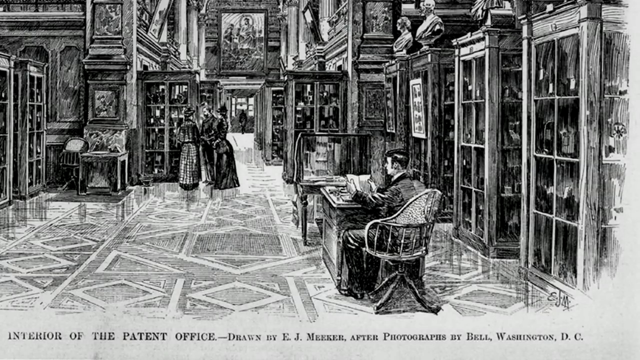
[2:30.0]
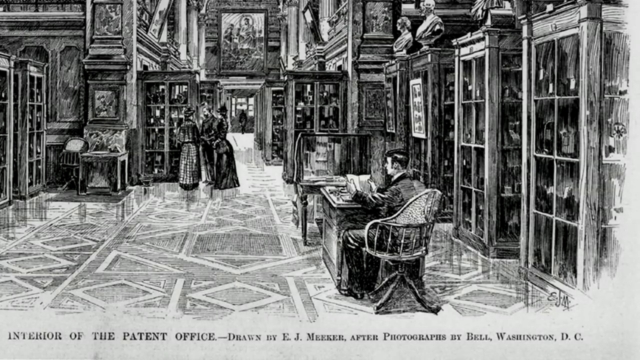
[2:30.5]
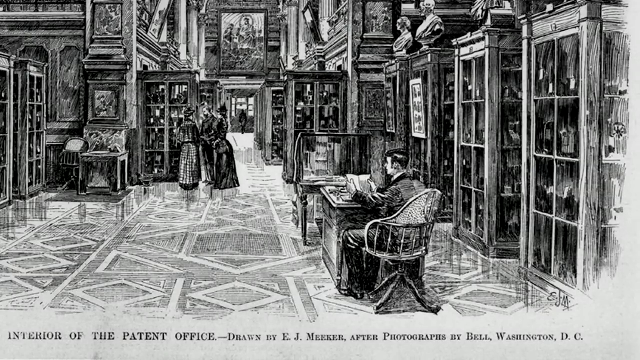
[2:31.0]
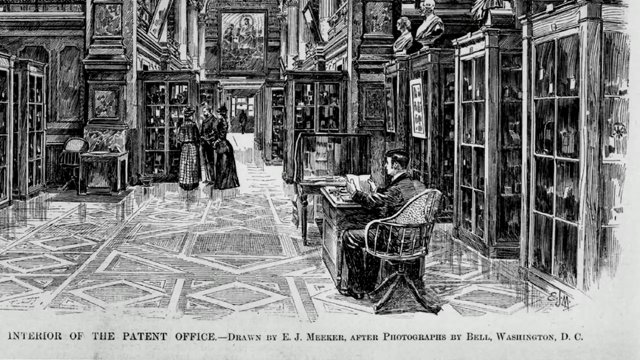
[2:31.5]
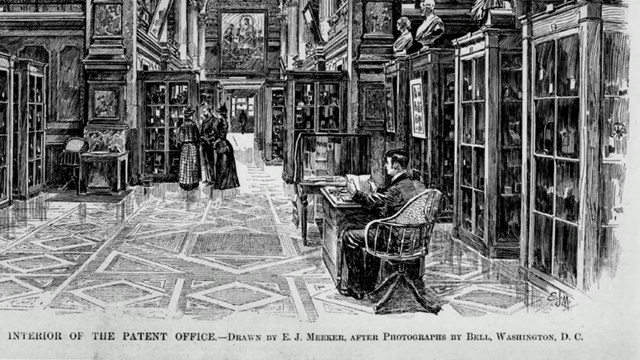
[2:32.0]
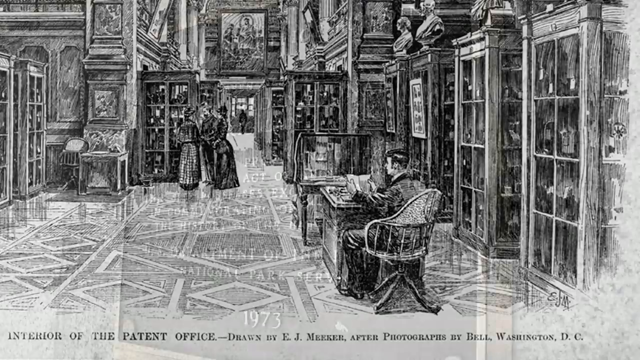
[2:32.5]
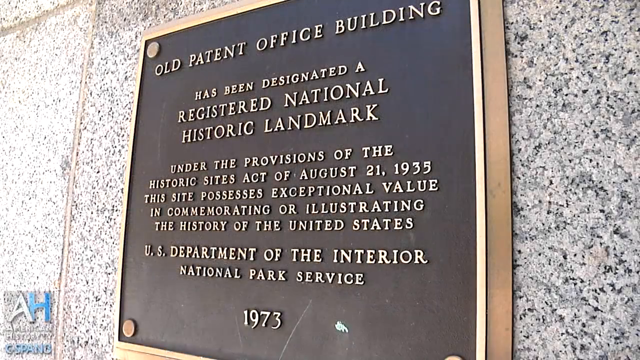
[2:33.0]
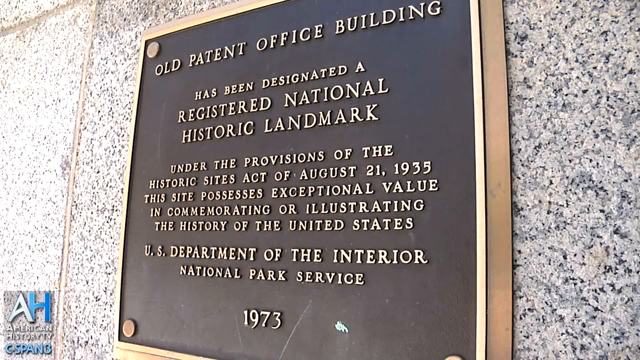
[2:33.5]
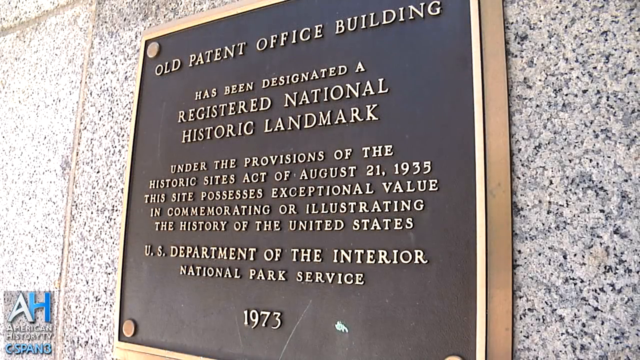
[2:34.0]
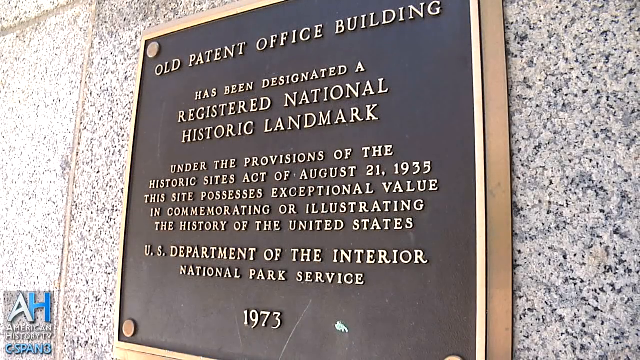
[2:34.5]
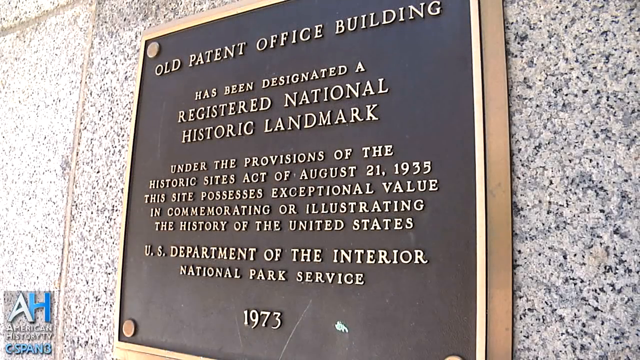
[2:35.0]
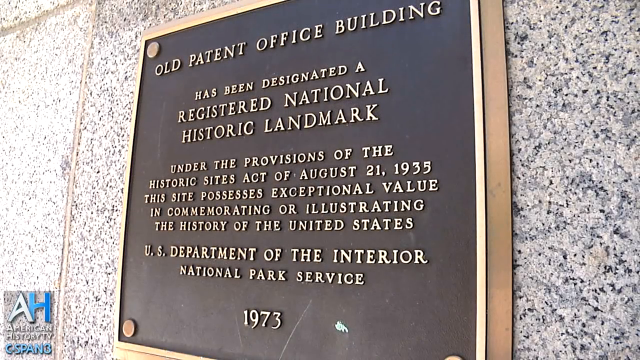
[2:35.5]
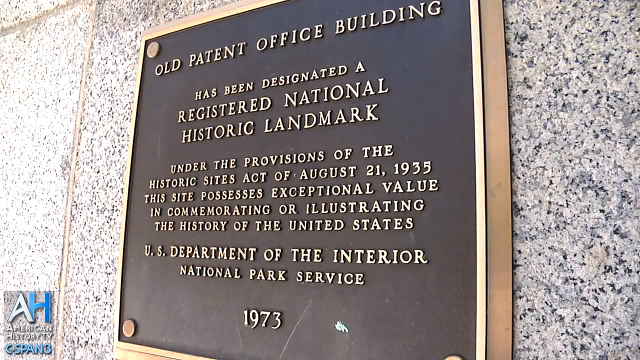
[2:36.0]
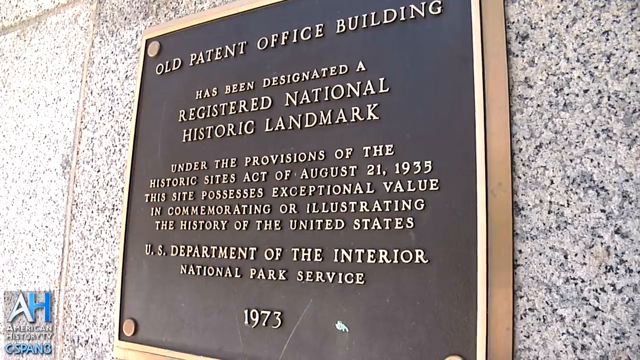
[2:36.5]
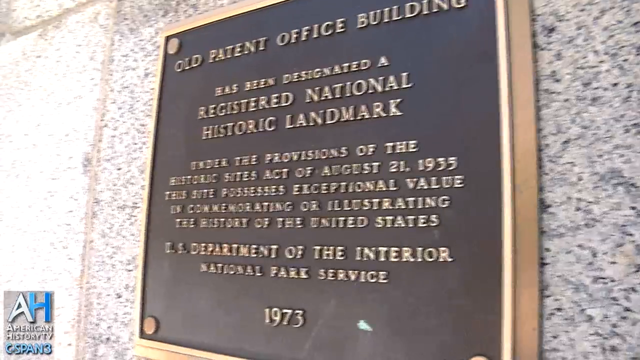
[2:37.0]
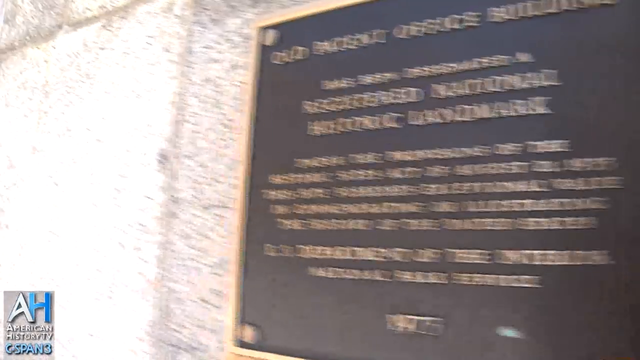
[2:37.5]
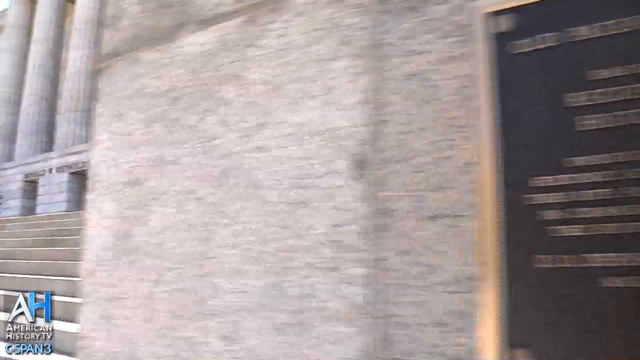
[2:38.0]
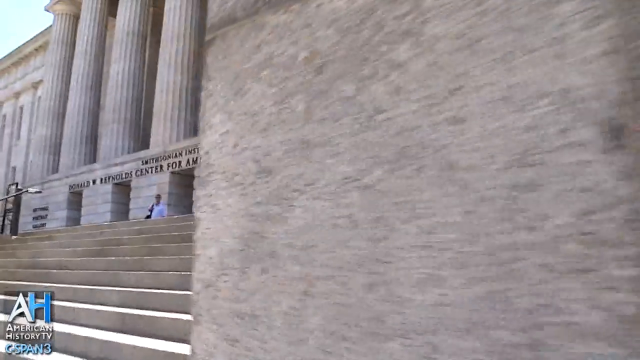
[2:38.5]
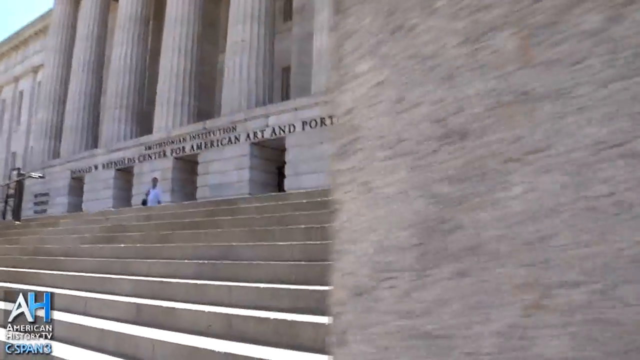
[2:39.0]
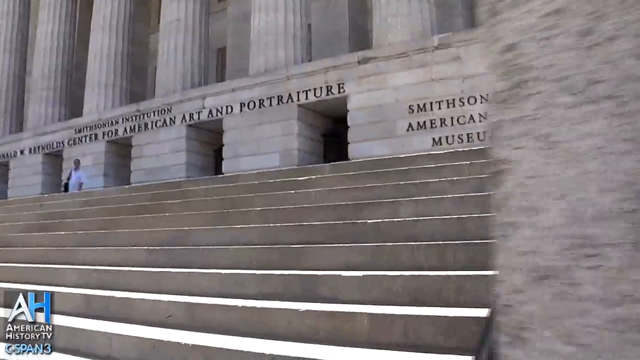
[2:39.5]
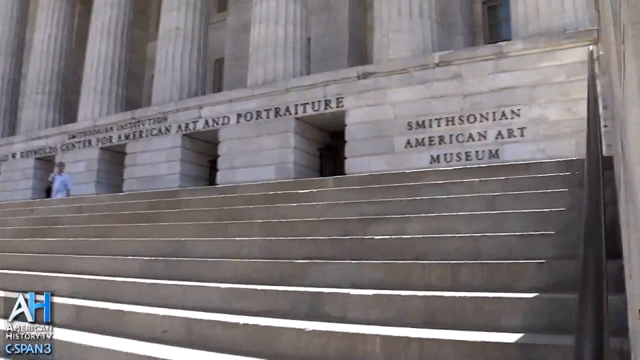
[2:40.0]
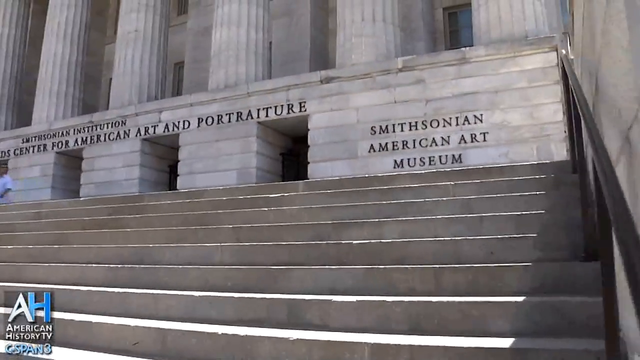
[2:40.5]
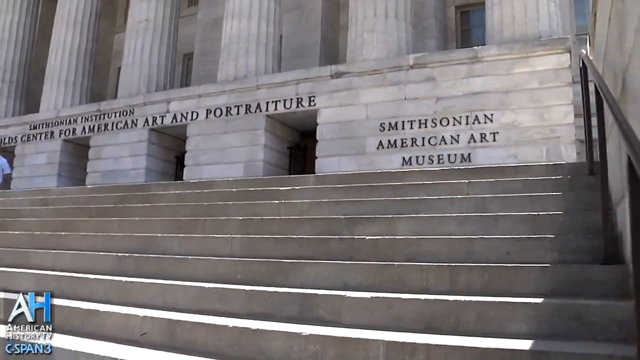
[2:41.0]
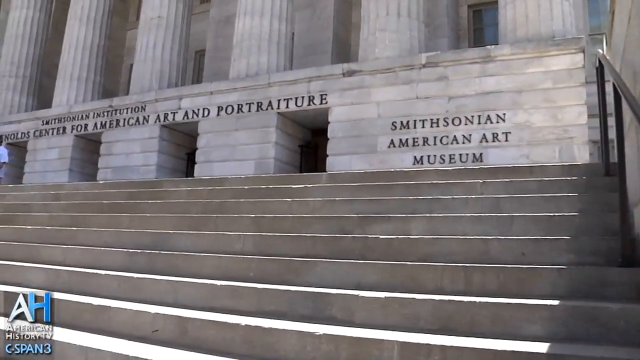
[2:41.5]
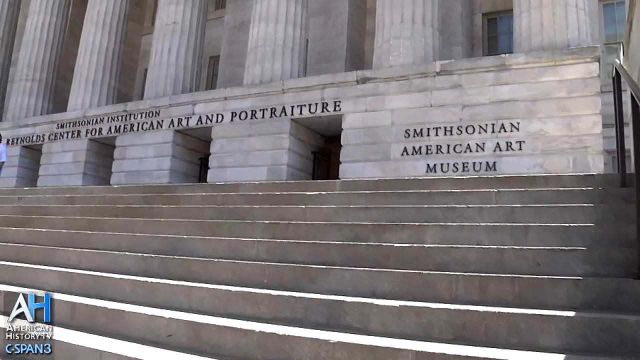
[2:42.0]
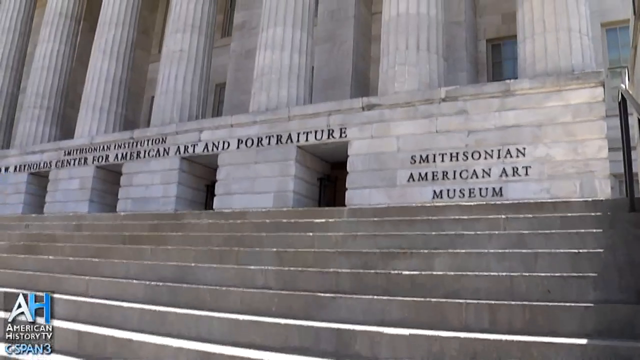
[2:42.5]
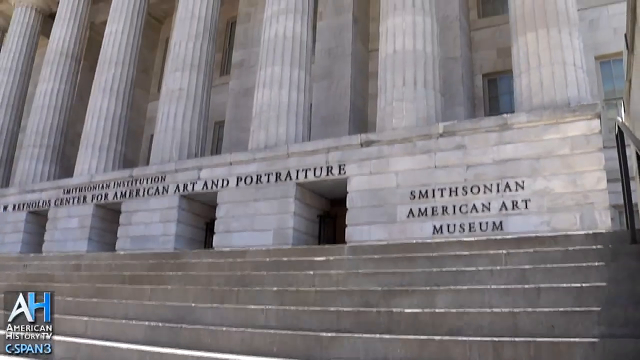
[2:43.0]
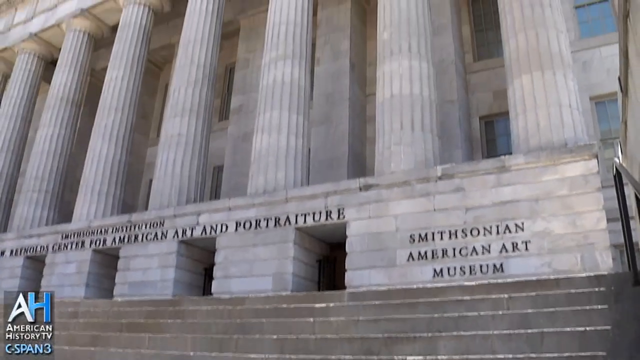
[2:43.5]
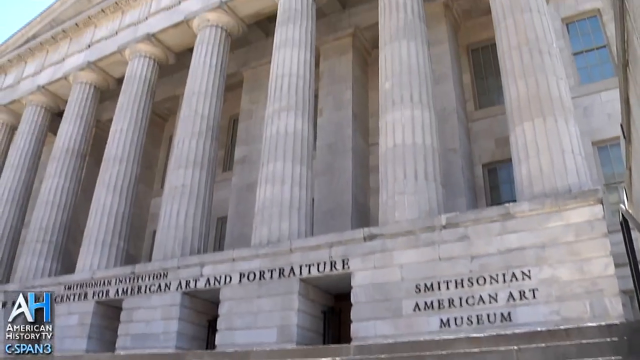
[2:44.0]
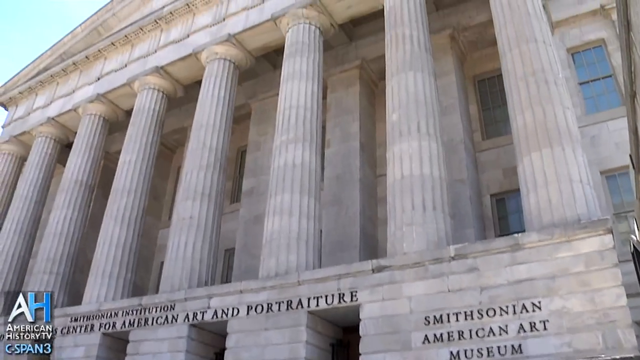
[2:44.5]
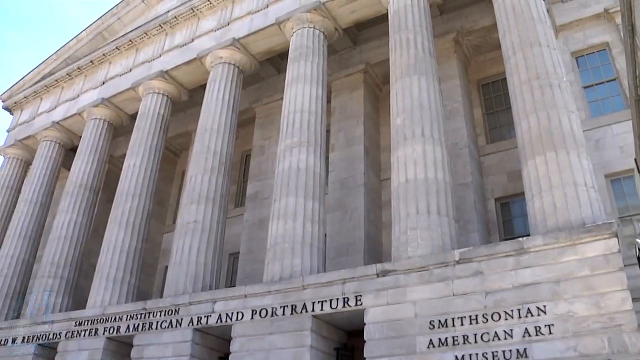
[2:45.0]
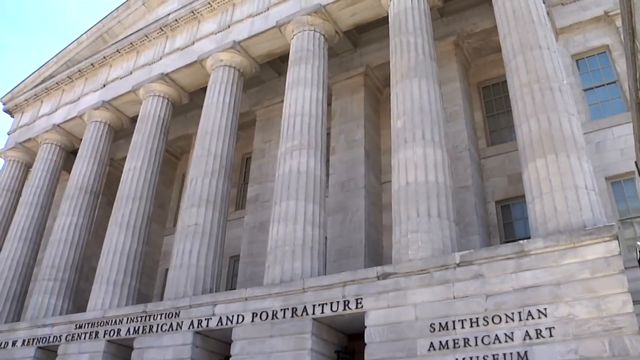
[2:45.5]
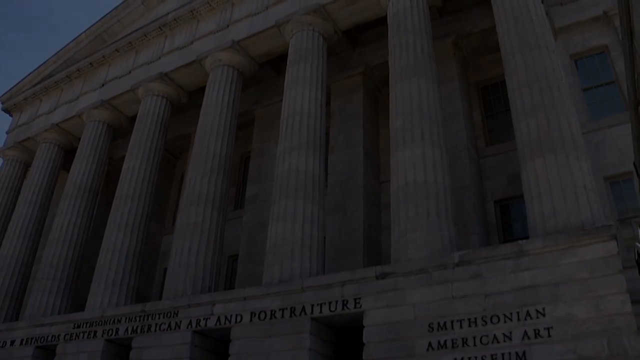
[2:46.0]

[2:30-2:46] A Victorian cartoon of the inside of the patent office shows lots of glass cases with little tags on them, looking almost like a museum. A man with very pronounced sideburns sits at a desk in the foreground, looking at a book. Two women and a man are in the distance, apparently looking at something in a case. Paintings hang on the wall, and busts of different men are on top of the cases. A plaque on a wall reads: "The Old Patent Office Building has been designated a registered National Historic Landmark under the provisions of the Historic Sites Act of August 21st, 1935. This site possesses exceptional value in commemorating or illustrating the history of the United States. U.S. Department of the Interior National Park Service 1973."